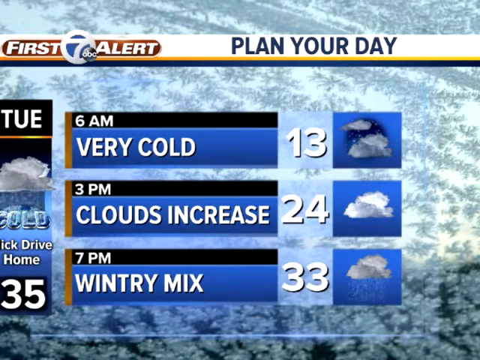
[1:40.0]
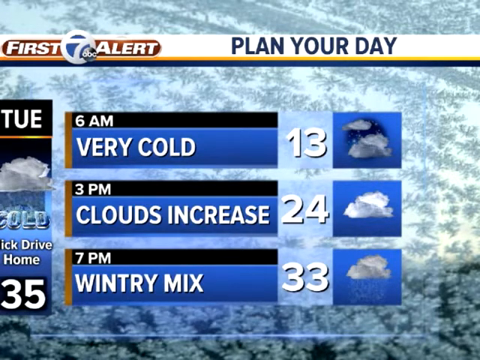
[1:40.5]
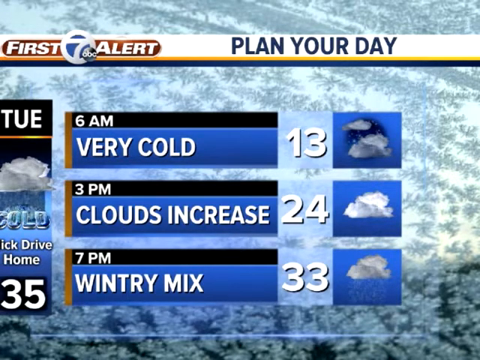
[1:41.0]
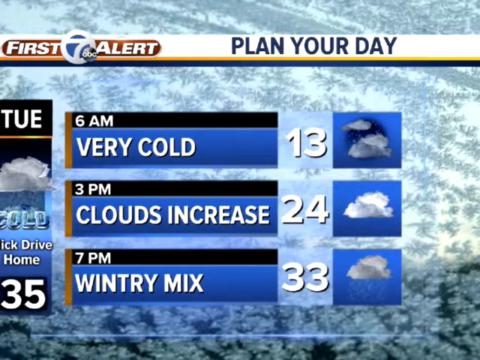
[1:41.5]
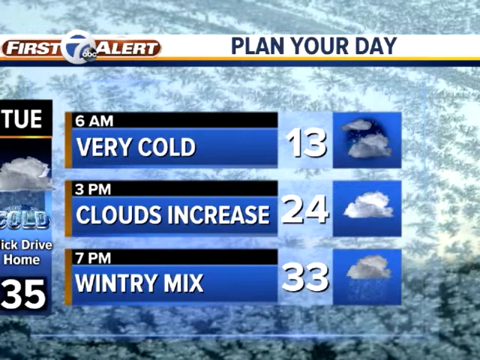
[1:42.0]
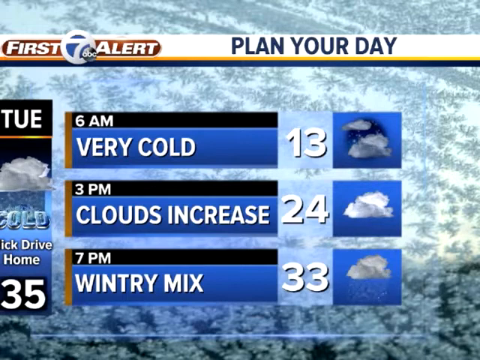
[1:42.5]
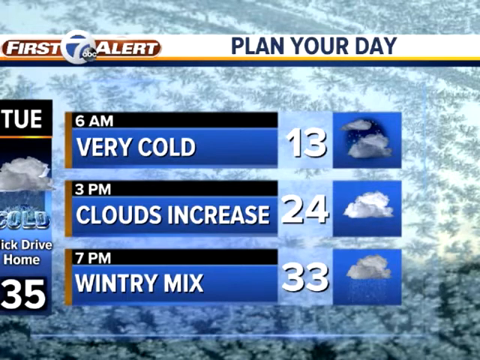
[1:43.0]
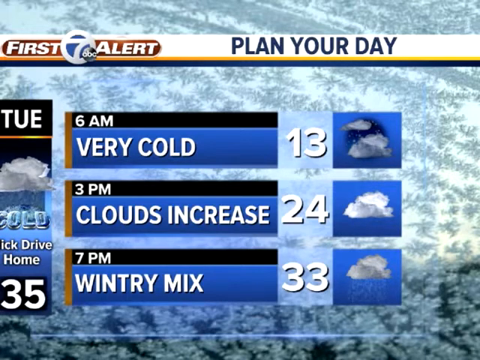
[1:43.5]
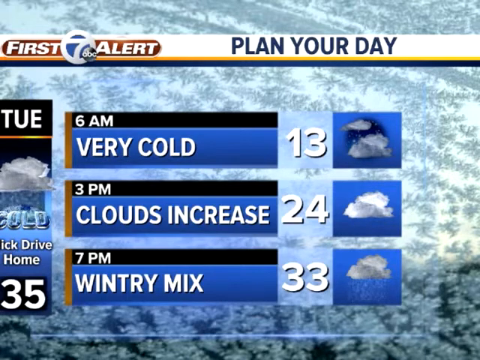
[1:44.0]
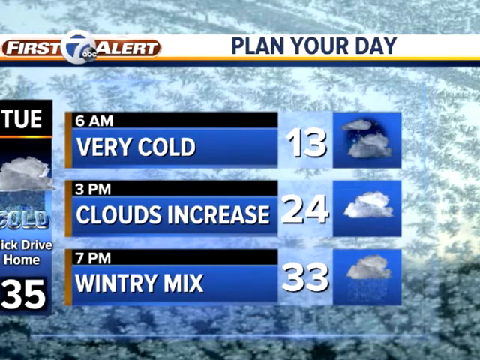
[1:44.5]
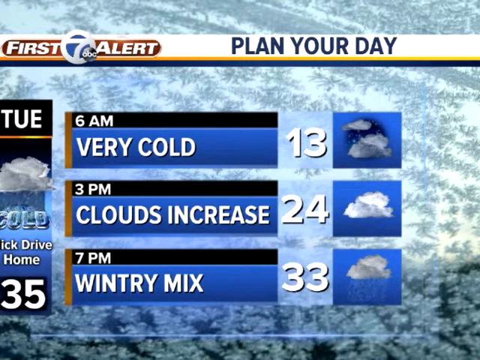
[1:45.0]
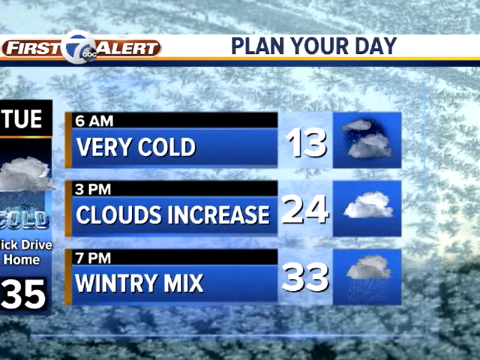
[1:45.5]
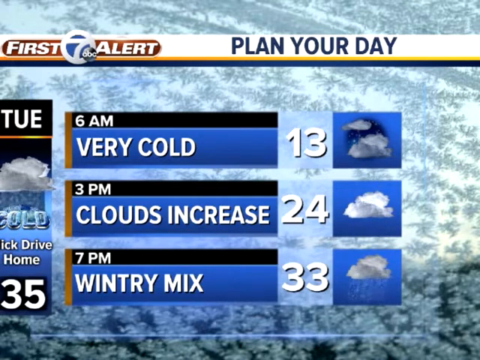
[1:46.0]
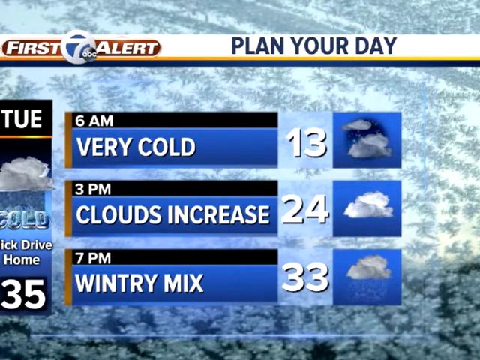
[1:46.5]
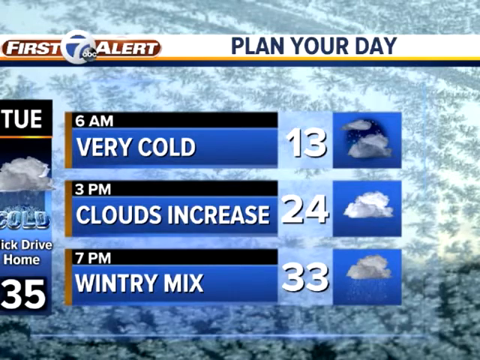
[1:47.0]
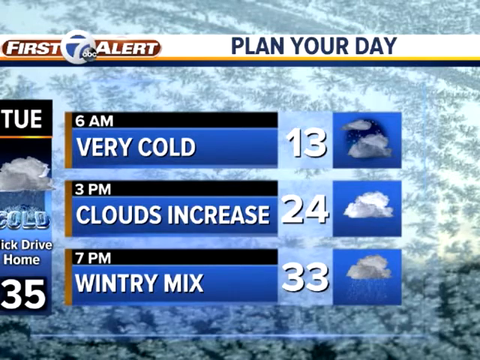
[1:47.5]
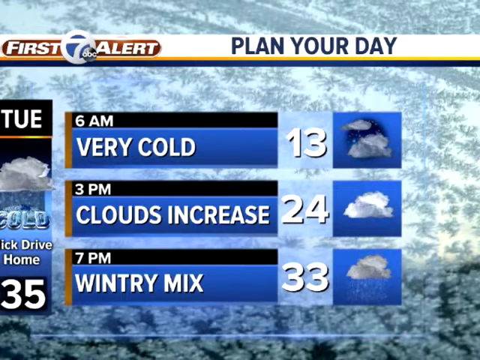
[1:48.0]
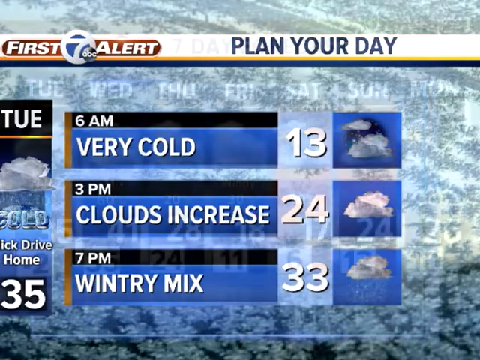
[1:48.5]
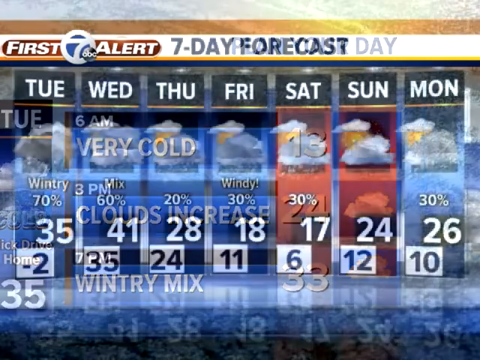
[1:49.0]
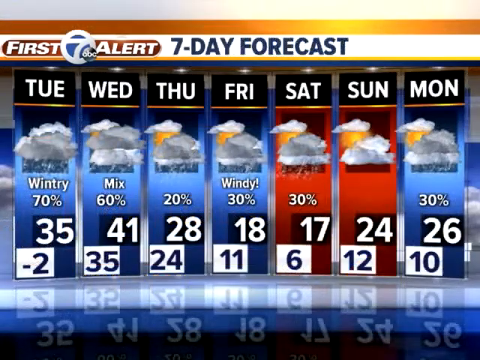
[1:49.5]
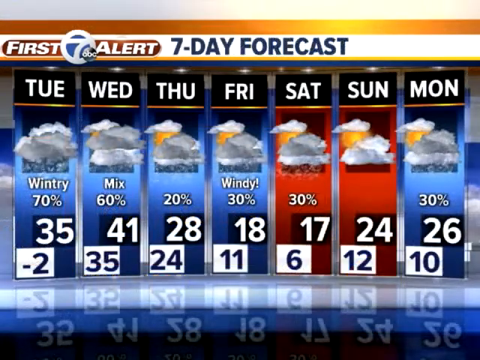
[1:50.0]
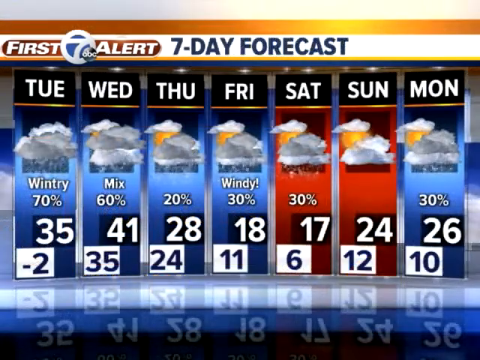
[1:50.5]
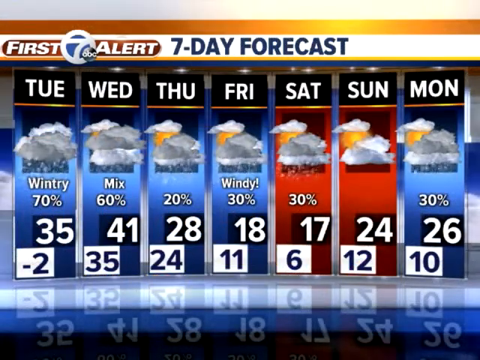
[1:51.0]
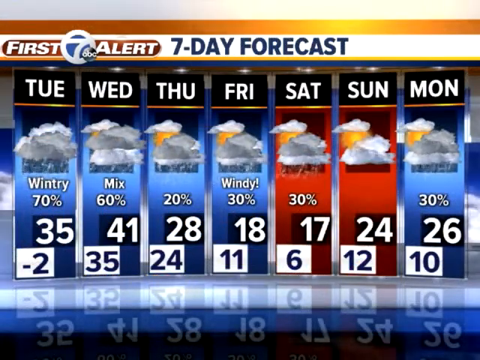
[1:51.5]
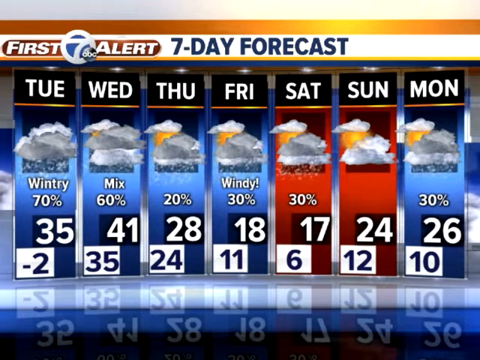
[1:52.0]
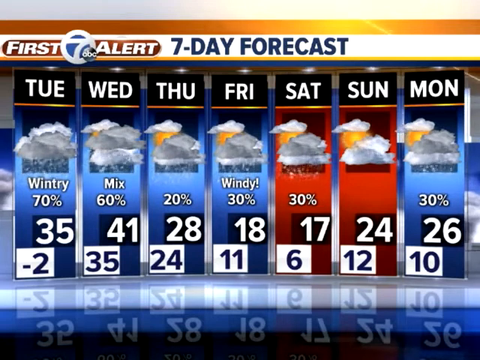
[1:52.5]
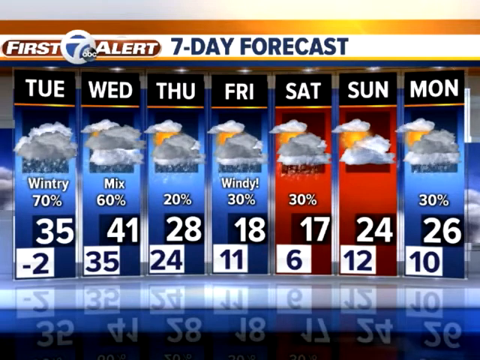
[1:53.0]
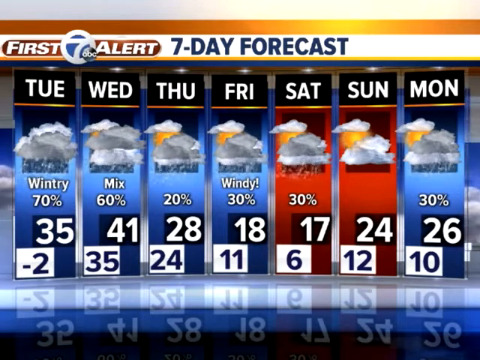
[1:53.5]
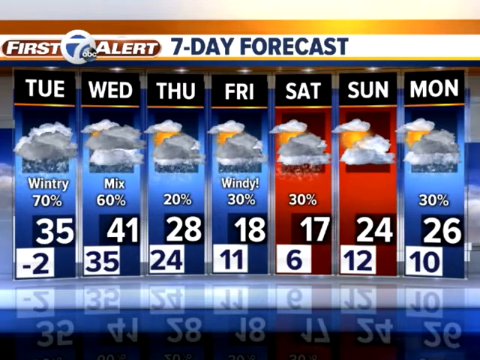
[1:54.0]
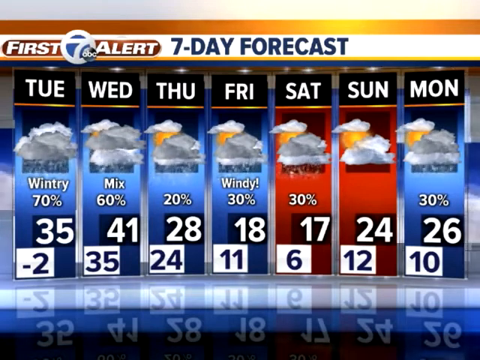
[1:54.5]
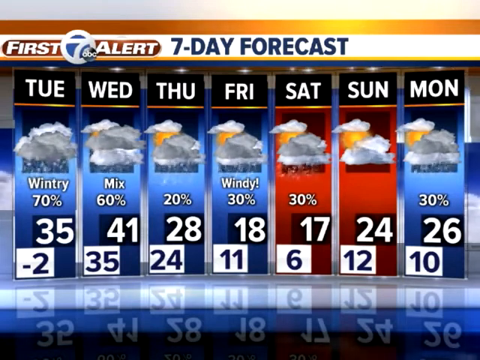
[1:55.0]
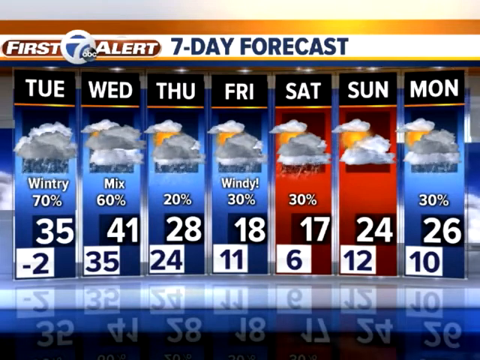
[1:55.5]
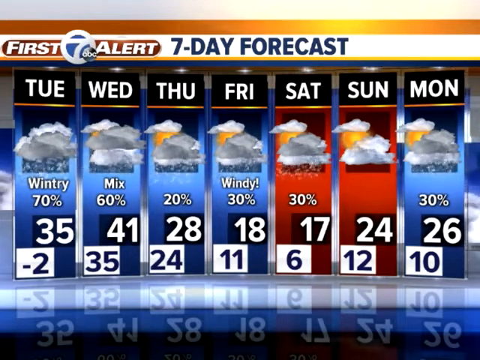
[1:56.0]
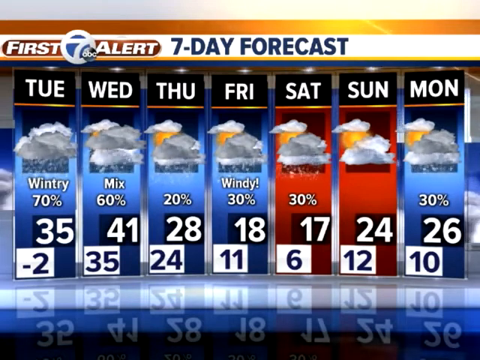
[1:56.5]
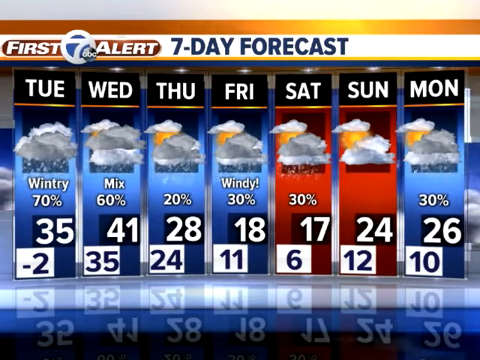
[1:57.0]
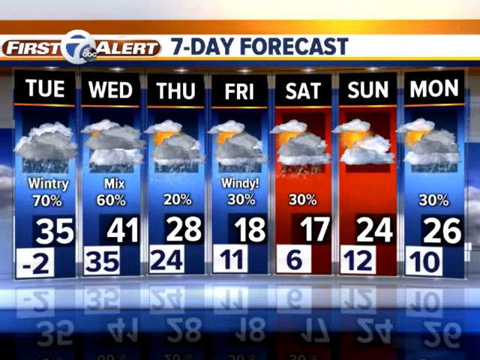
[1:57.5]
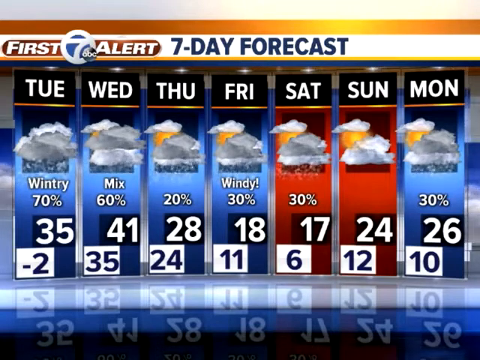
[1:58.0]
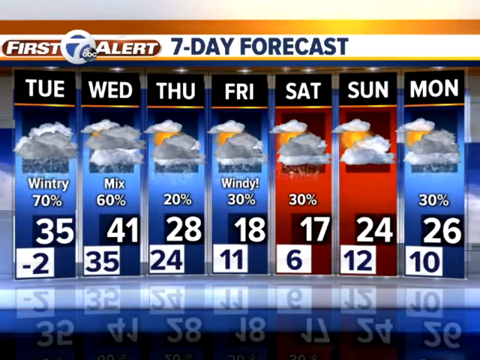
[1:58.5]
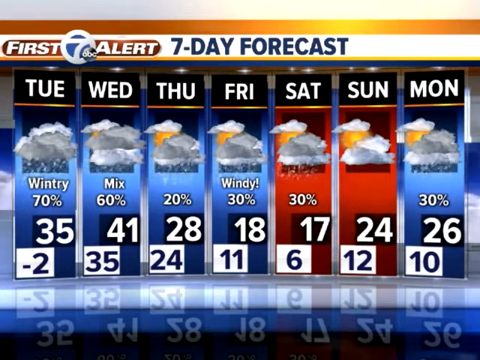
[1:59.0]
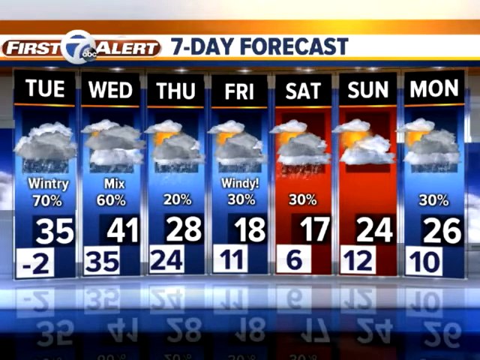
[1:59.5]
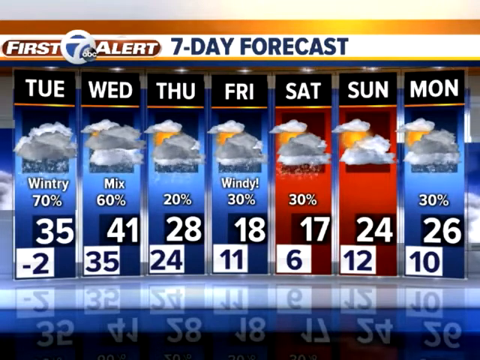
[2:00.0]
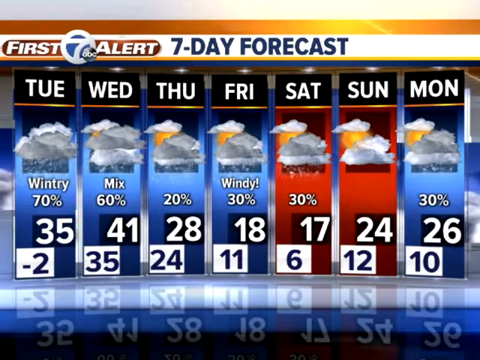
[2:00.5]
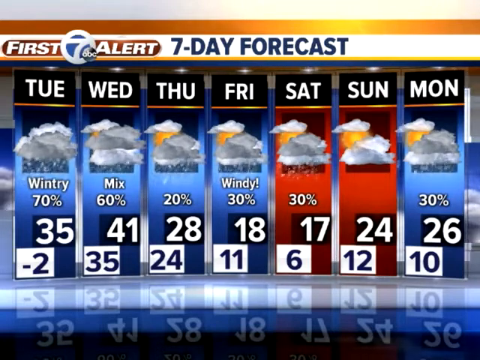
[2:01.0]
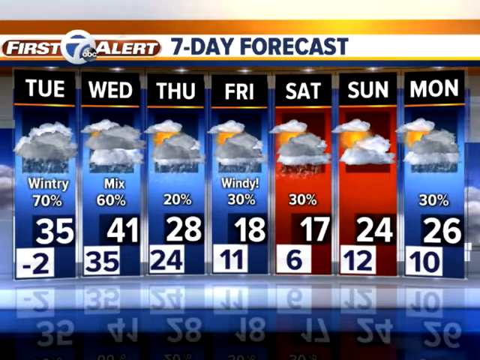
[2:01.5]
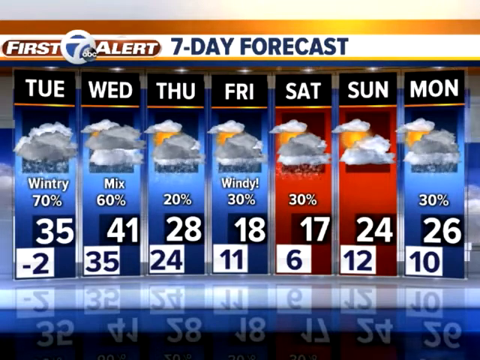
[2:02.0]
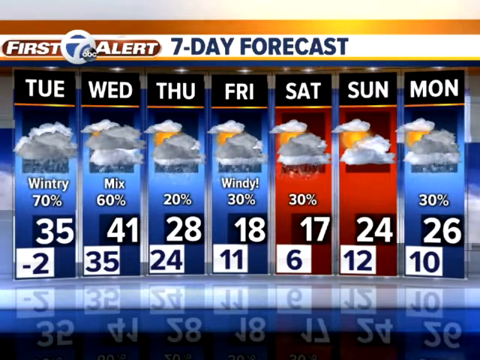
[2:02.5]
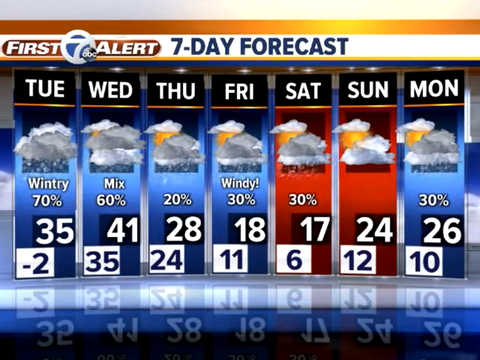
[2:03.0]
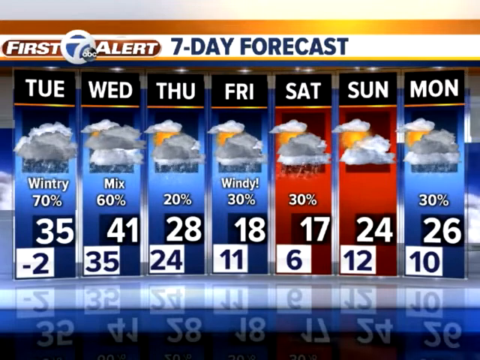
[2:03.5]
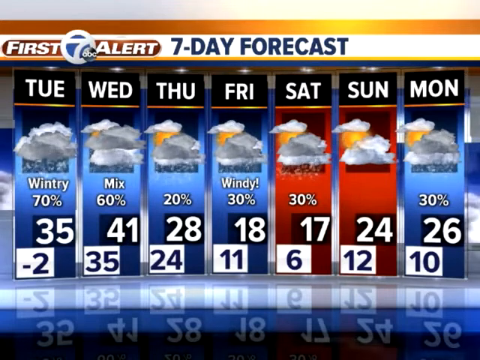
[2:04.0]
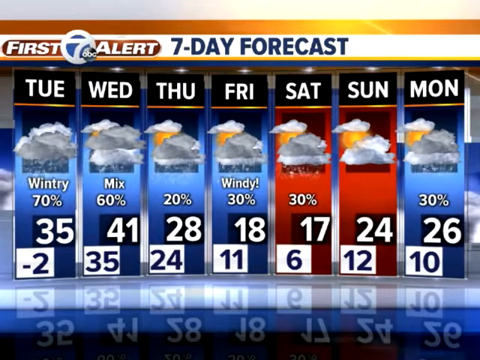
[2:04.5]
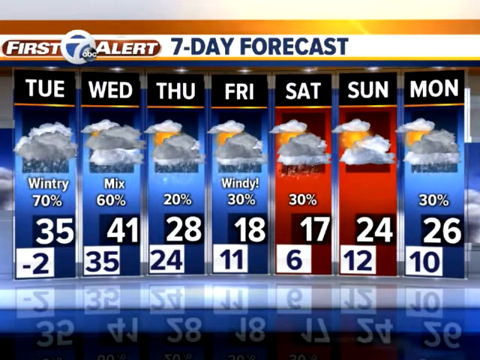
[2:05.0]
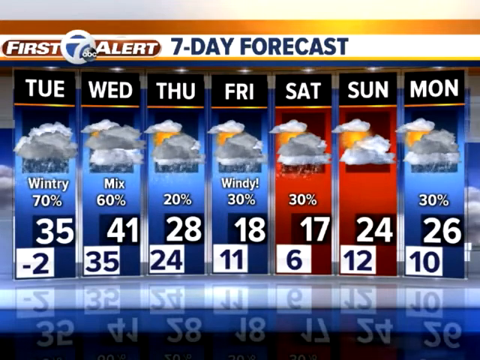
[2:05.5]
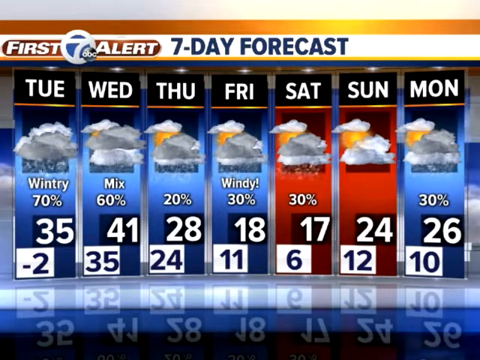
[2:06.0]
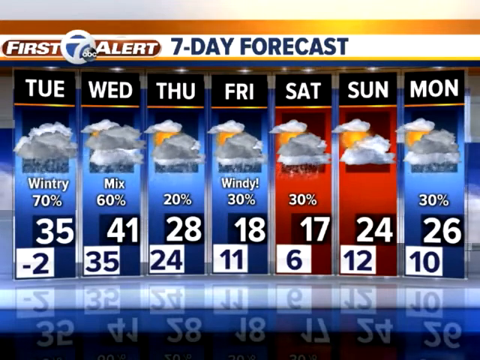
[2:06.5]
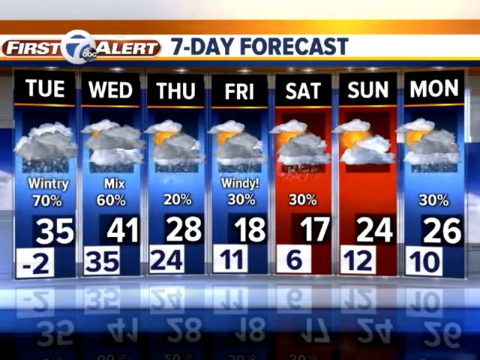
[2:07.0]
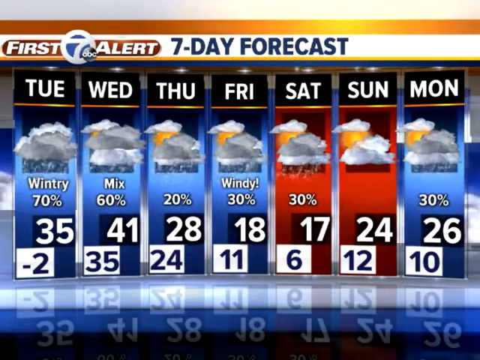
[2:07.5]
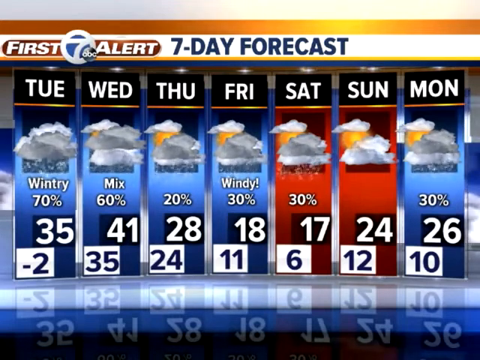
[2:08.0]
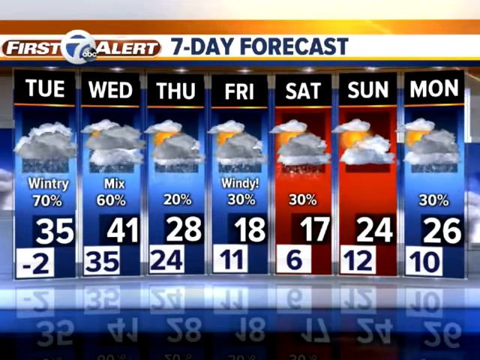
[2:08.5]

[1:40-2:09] A weather forecast shows how the weather is expected to develop on Tuesday: cold early in the morning, with temperatures as low as 13 degrees at 6 a.m., improving to 24 by 3 p.m., with a high of 33 degrees. The video then transitions to the forecast for the coming week: Tuesday, Wednesday, Thursday and Friday are cold, with low temperatures of minus 12 and minus two degrees Celsius and little sun. Conditions improve on Saturday and Sunday, with temperatures reaching a high of 24 degrees, then temperatures decrease on Monday, which is cloudy. The graphics use distinctive colors, such as blue when it is cold and red when it is warm.